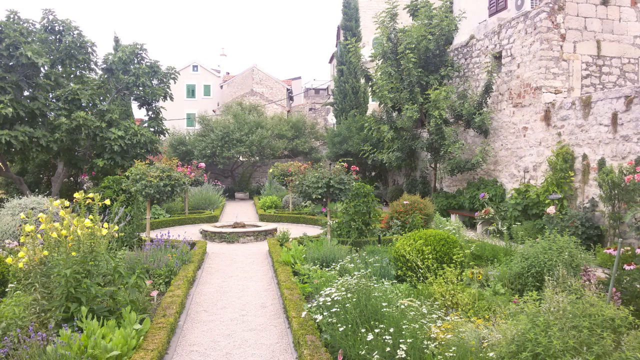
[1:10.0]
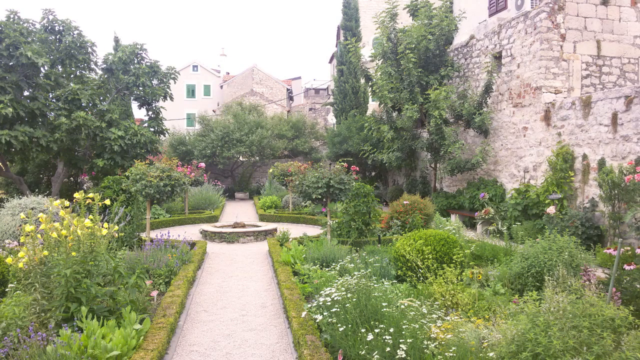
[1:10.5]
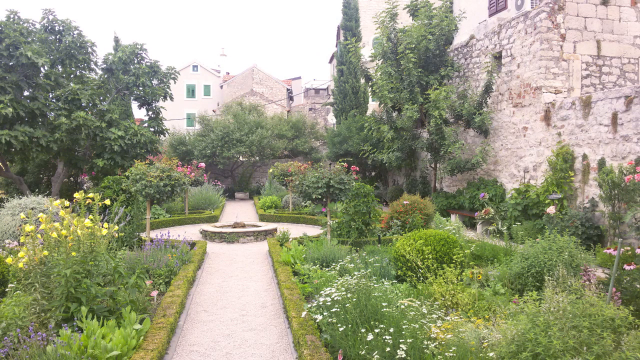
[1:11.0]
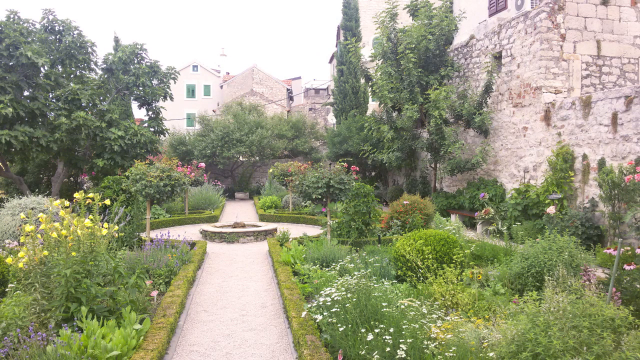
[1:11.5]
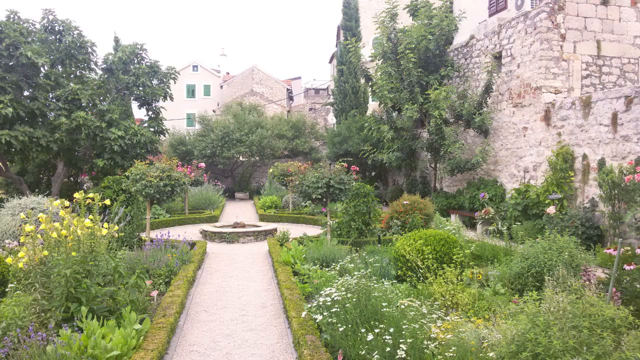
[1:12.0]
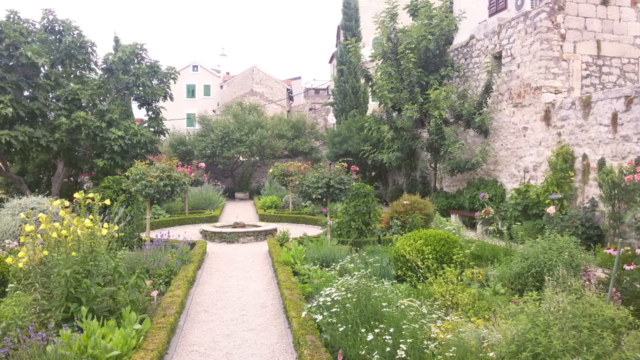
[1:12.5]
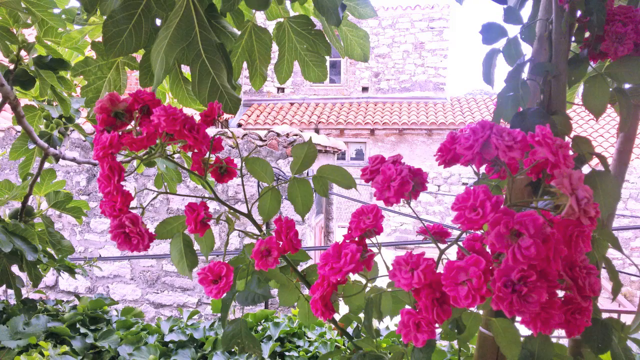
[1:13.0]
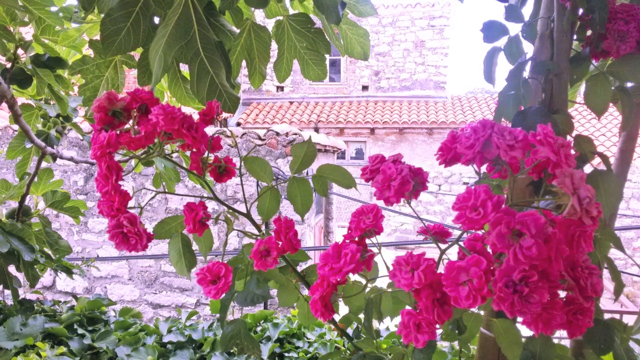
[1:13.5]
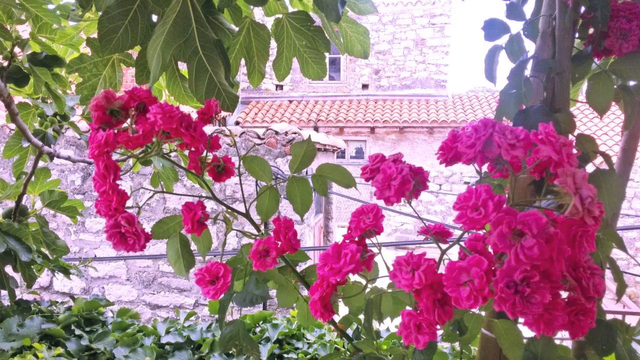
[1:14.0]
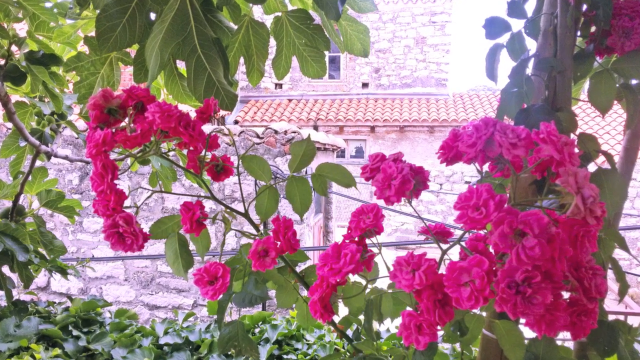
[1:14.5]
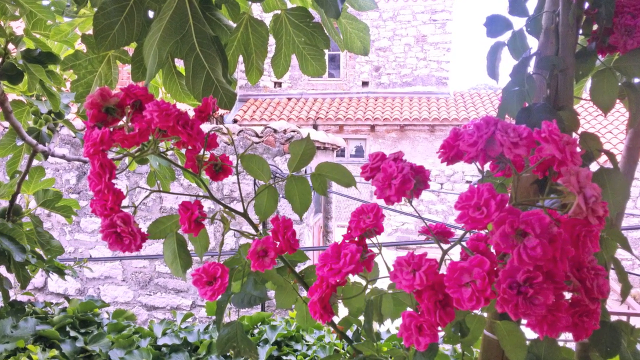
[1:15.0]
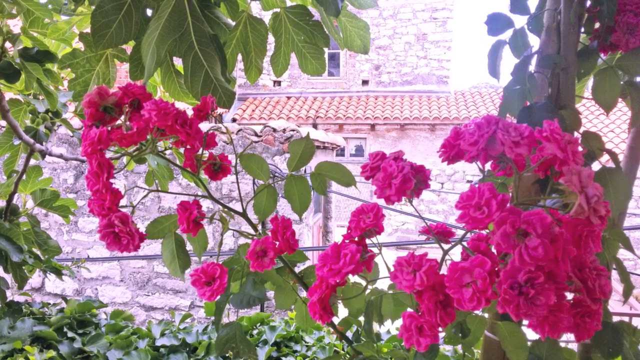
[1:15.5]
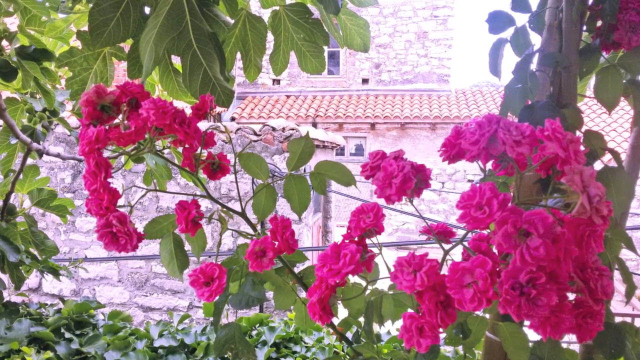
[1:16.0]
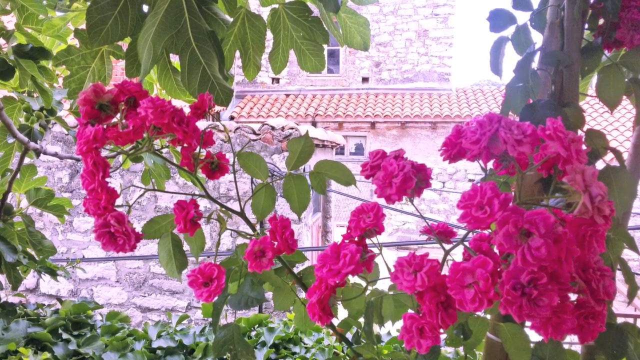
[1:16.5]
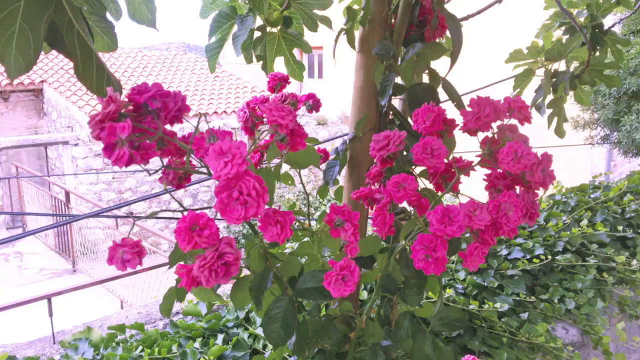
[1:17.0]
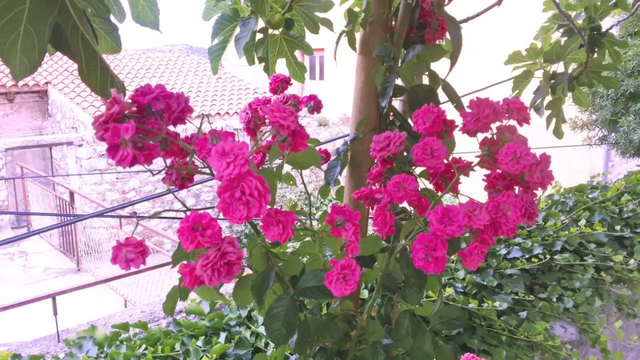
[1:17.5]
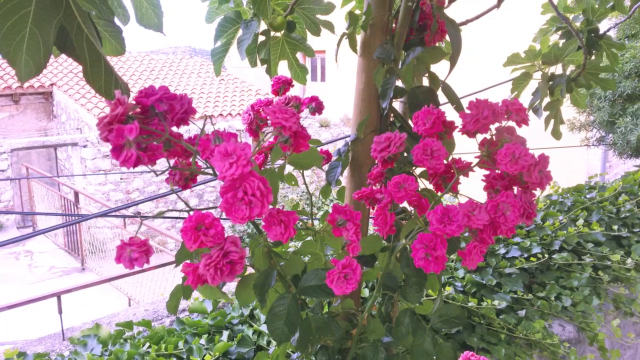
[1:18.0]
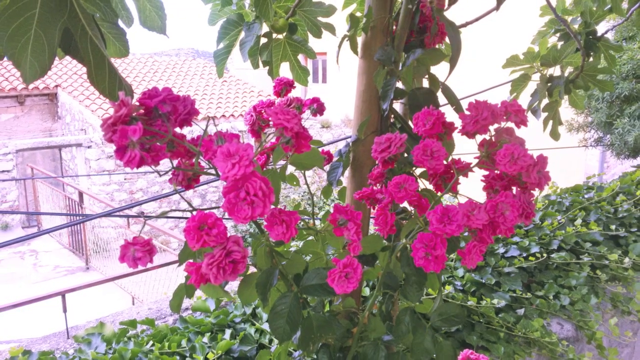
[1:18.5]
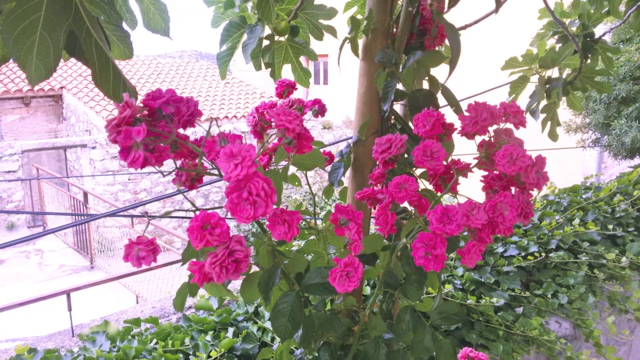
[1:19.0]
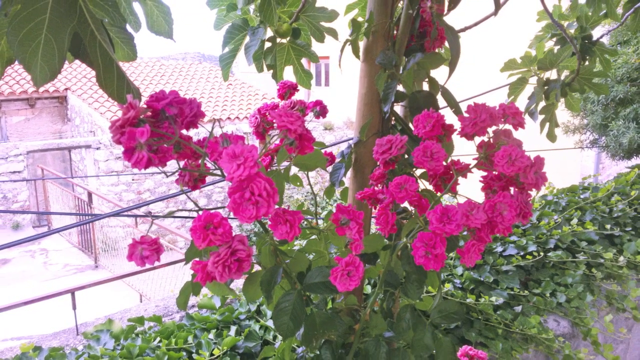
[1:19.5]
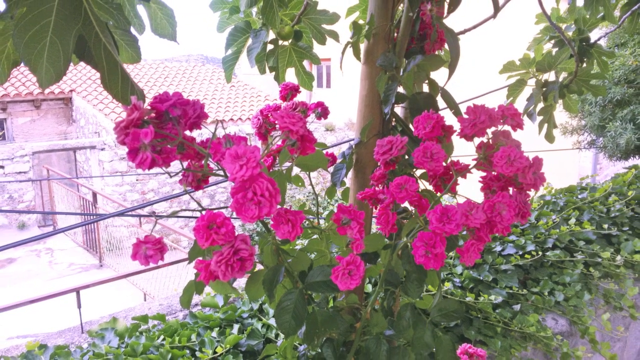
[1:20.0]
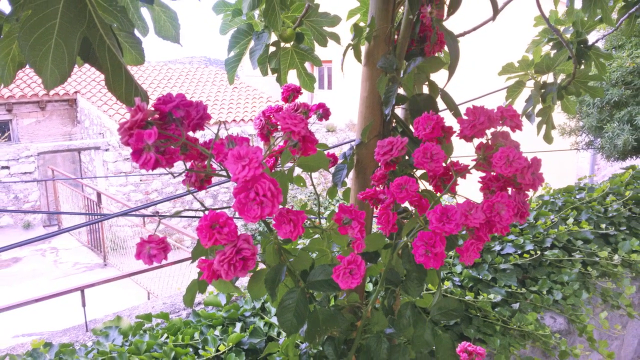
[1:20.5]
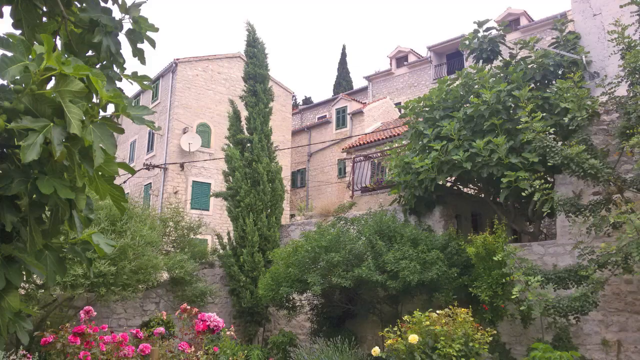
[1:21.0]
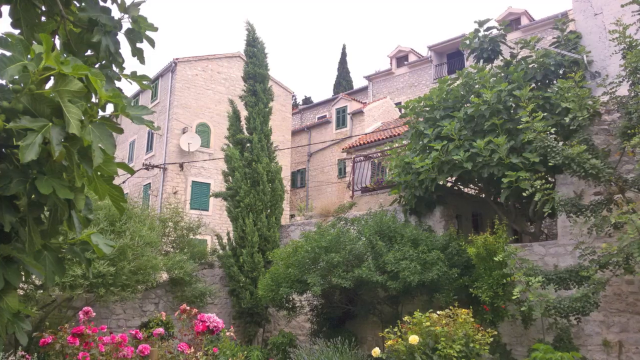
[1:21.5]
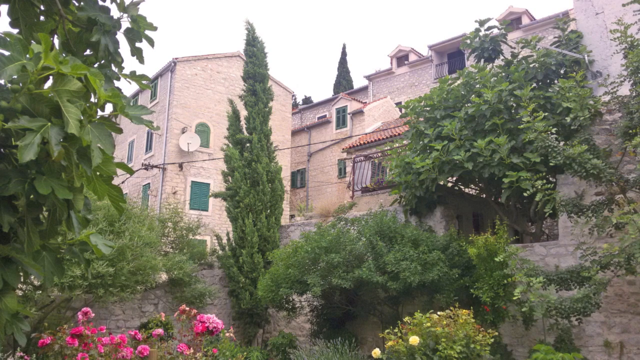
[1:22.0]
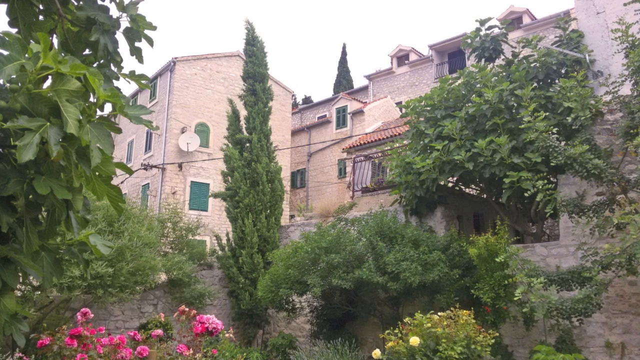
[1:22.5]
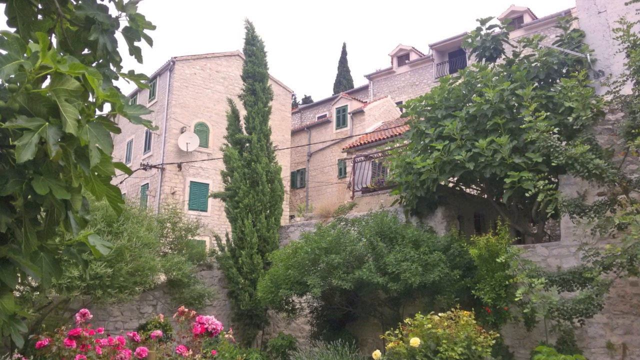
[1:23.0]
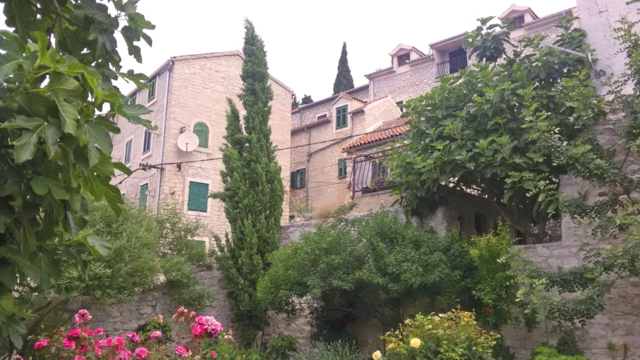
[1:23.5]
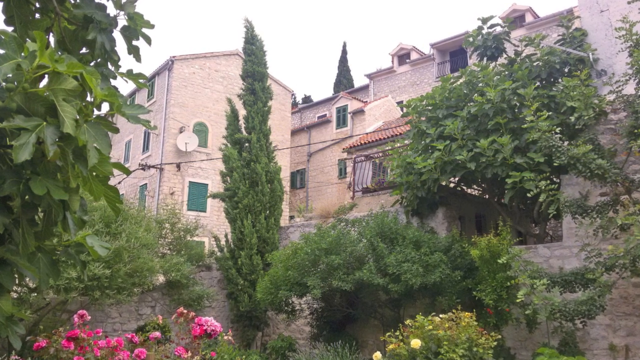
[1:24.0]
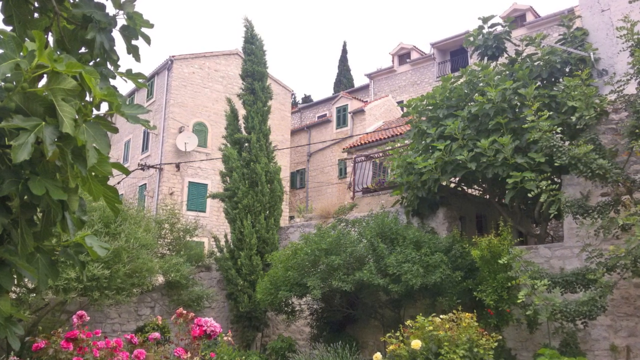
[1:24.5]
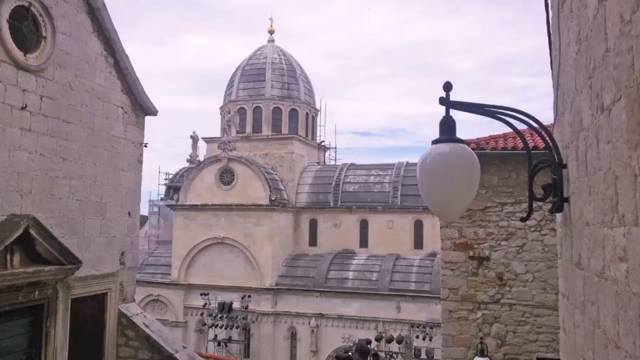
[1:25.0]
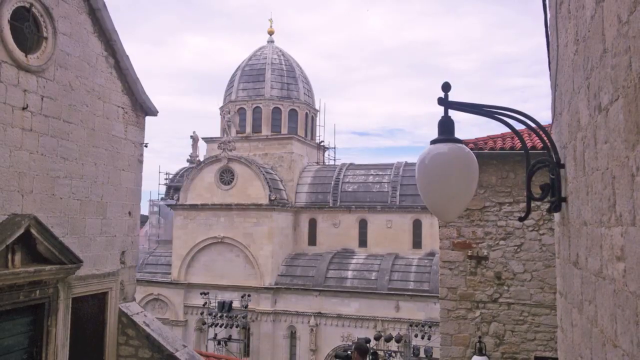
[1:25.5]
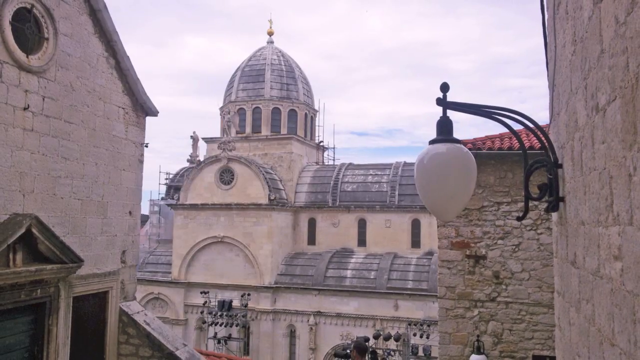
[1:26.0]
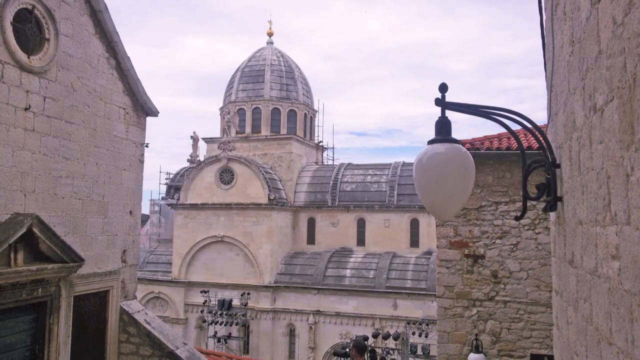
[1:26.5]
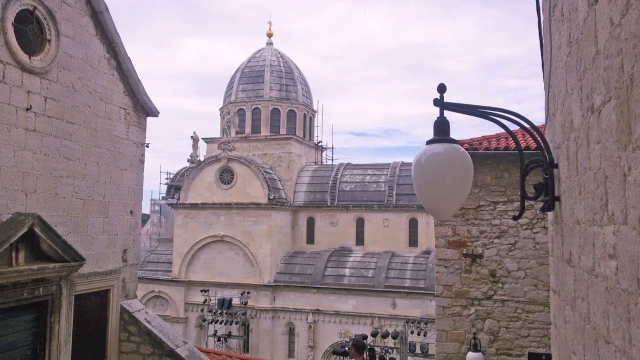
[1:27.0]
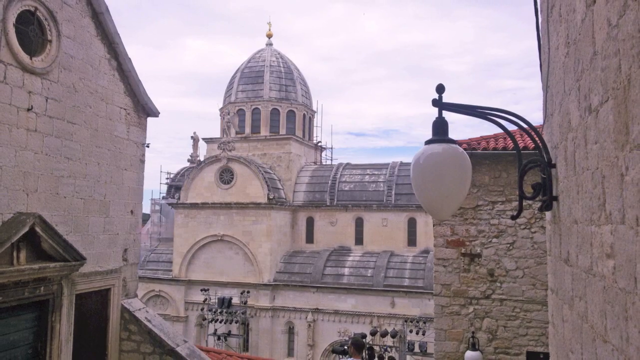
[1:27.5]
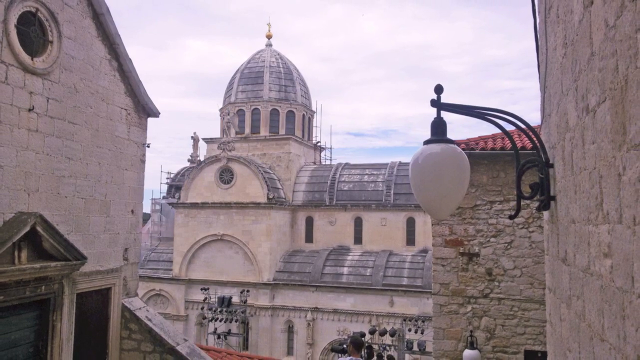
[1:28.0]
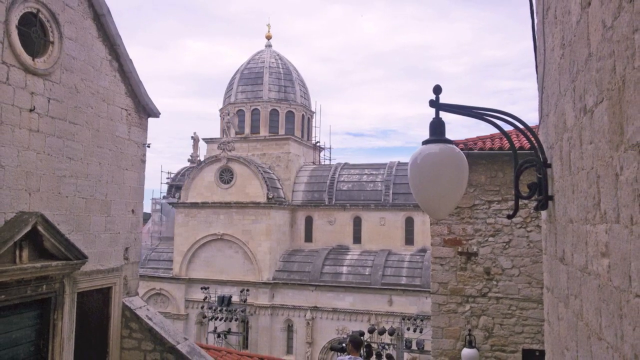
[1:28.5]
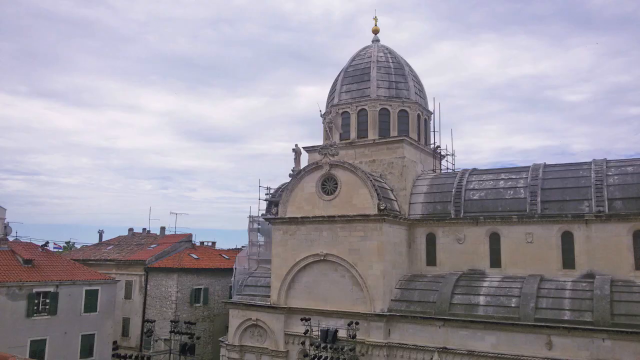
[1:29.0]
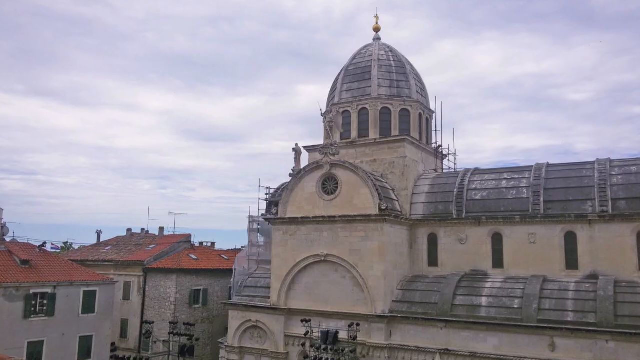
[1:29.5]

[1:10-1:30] The video starts with some pink flowers with green leaves, possibly roses, and in the background a brick building with an orange roof. It starts zooming in a bit and transitions to a different angle of the same pink flowers, which have stems with green leaves. To the right are a green bush and green trees, and in the background are the roof of a house and some fences; it is very bright in the background and looks like it could potentially be a sunny day. Next is another brick building with a lot of plants and trees in front and green windows along the building. The camera zooms in a little, then transitions to a different building that almost looks like a church of some sort, with a dome up top, made of yellow brick of some sort. In the front is almost another part of the building, with a white light connected to the building and black metal holding the light in place. The video then shows another angle of the same brick dome building.